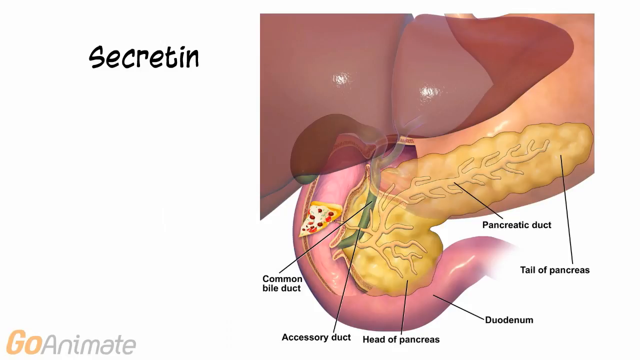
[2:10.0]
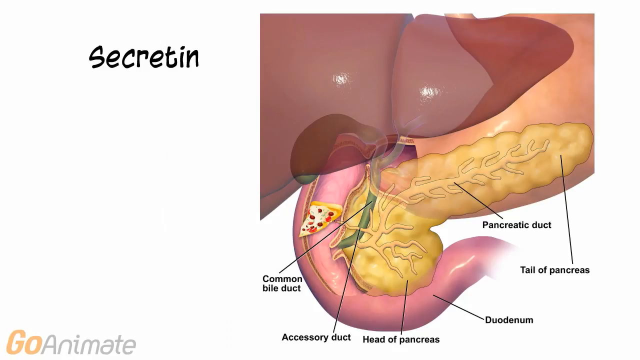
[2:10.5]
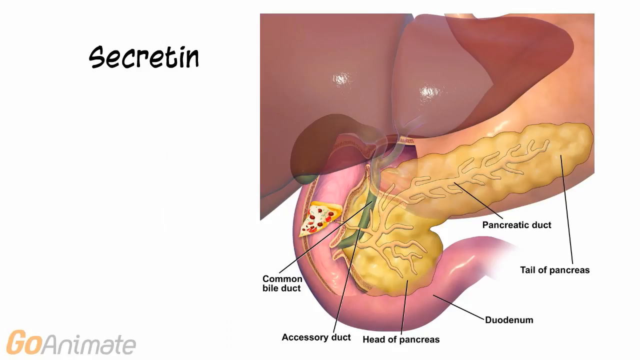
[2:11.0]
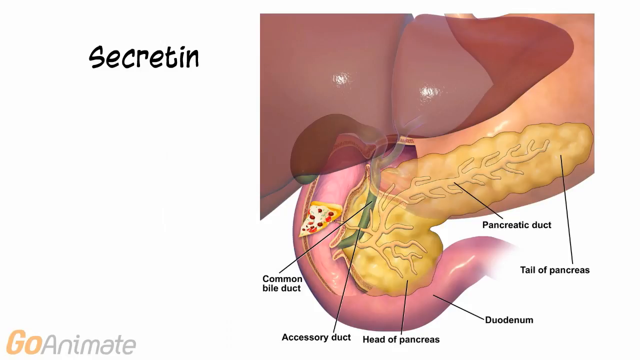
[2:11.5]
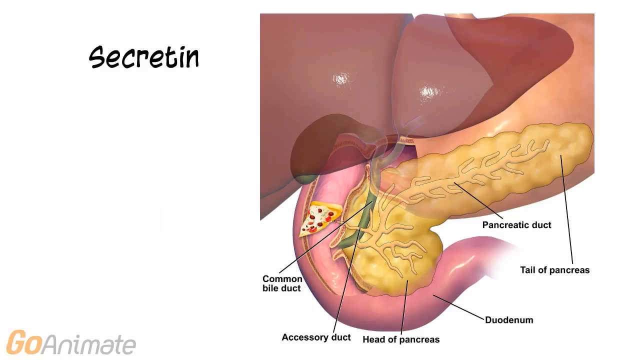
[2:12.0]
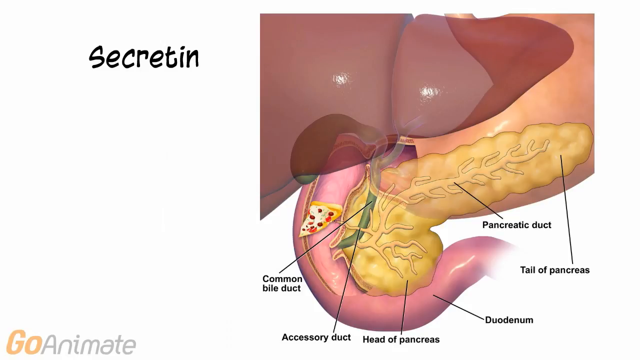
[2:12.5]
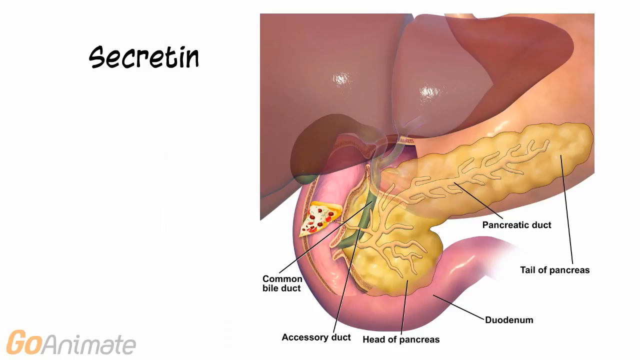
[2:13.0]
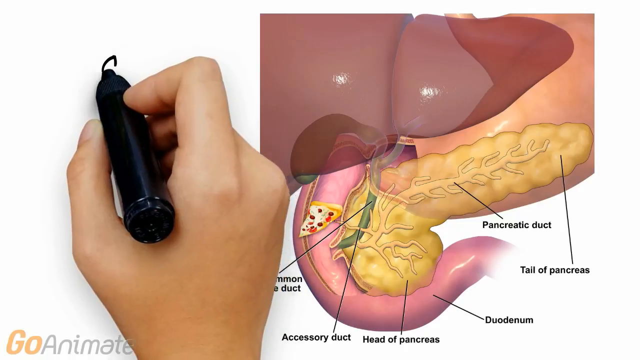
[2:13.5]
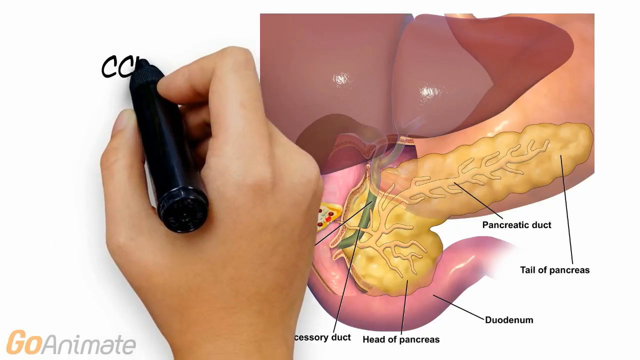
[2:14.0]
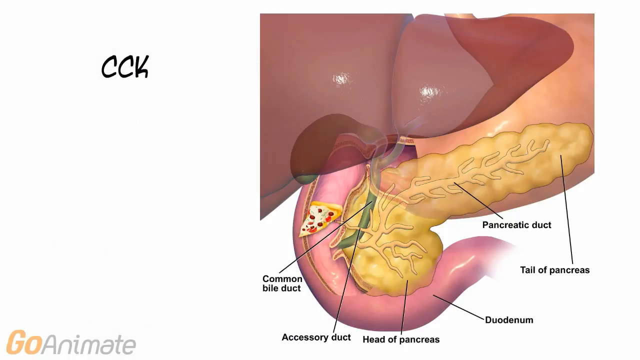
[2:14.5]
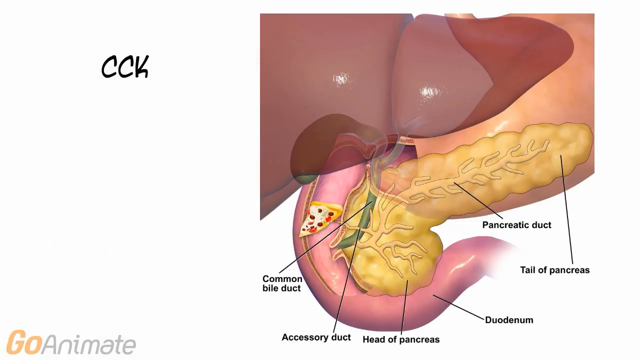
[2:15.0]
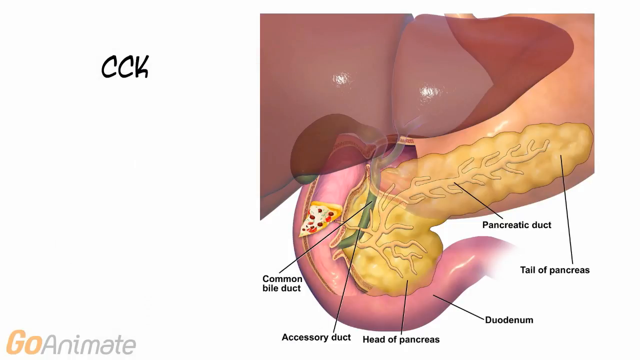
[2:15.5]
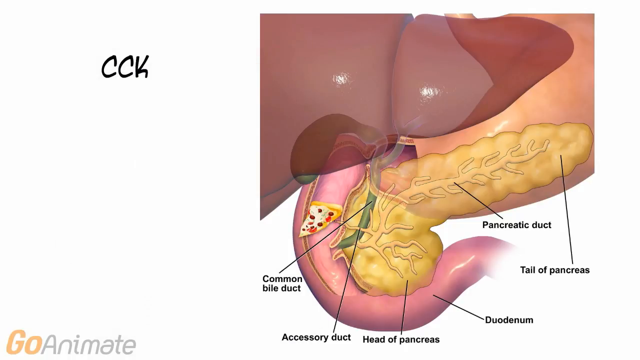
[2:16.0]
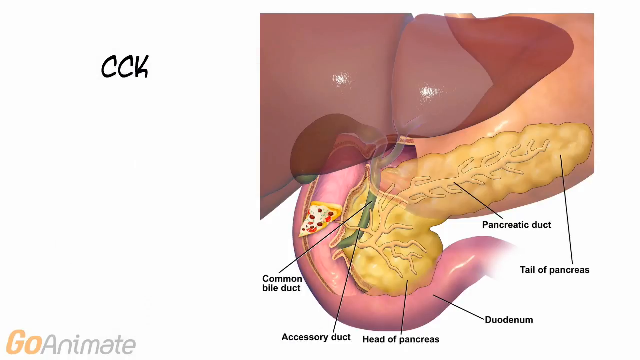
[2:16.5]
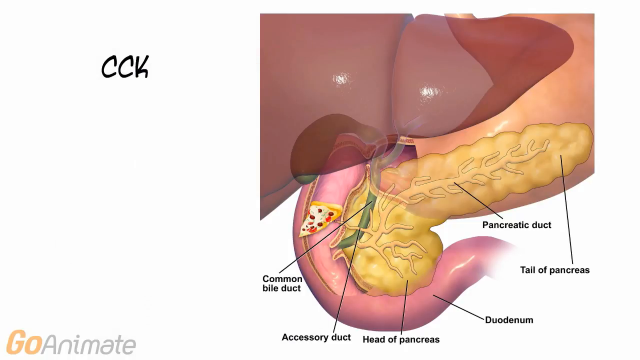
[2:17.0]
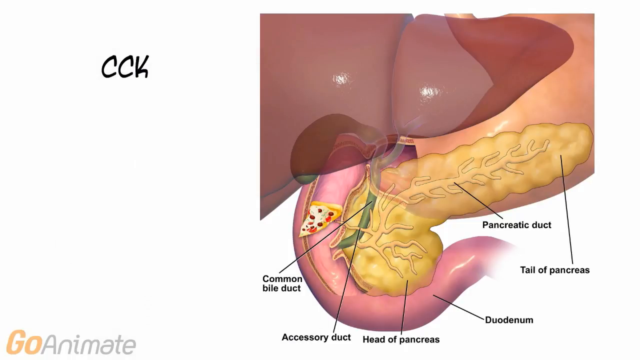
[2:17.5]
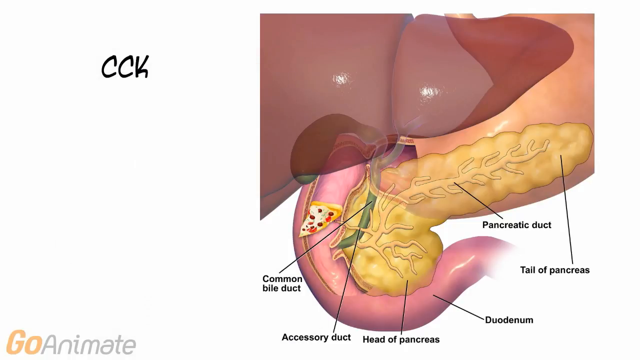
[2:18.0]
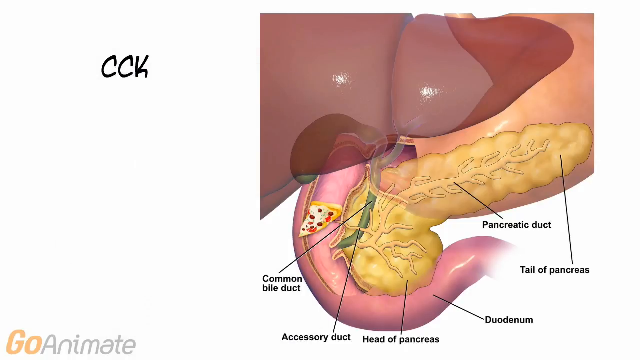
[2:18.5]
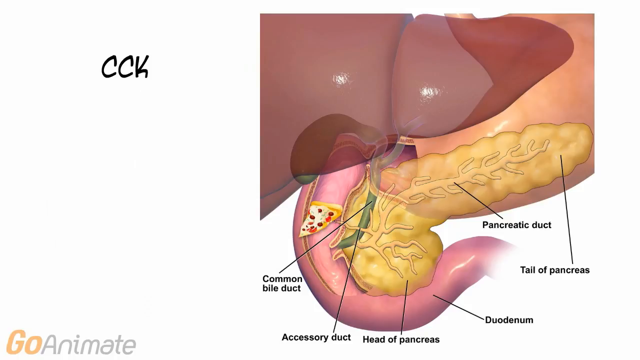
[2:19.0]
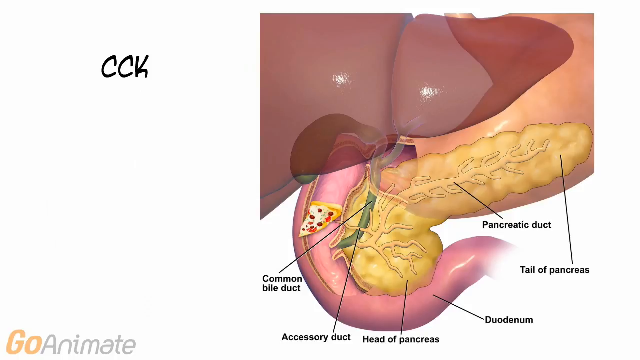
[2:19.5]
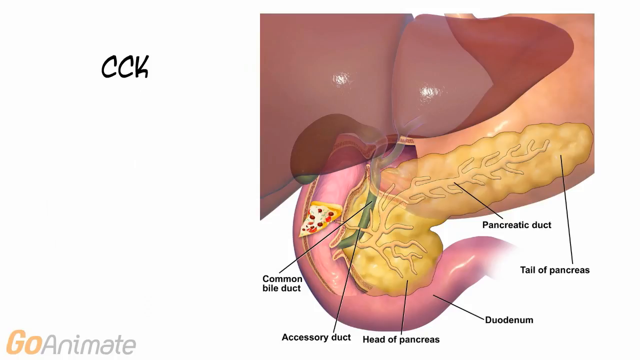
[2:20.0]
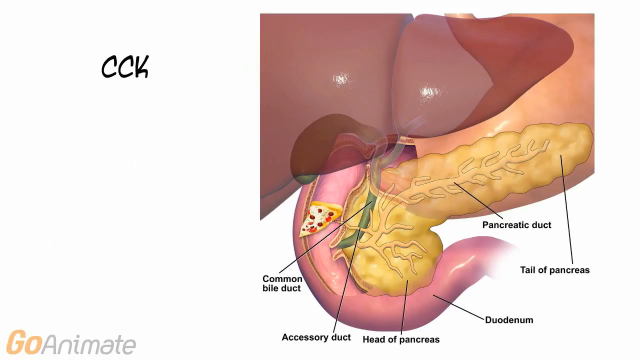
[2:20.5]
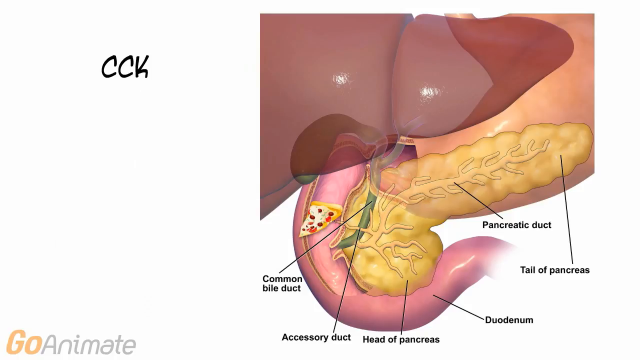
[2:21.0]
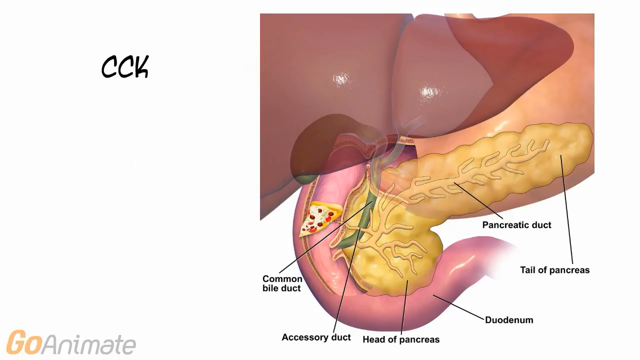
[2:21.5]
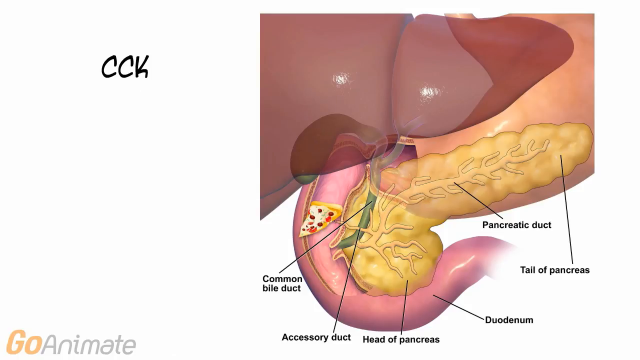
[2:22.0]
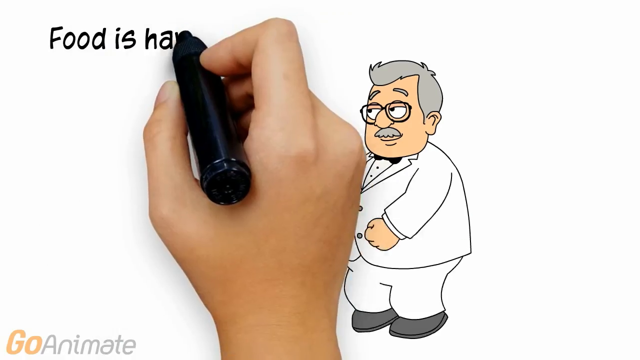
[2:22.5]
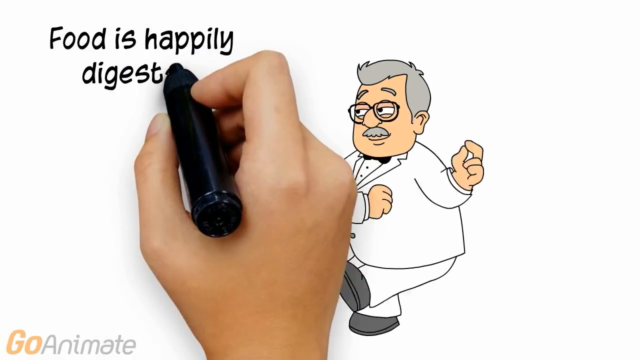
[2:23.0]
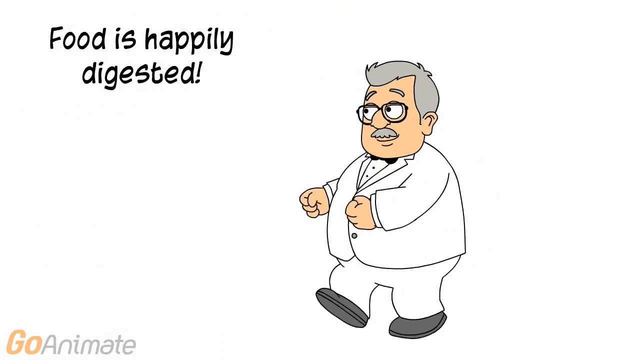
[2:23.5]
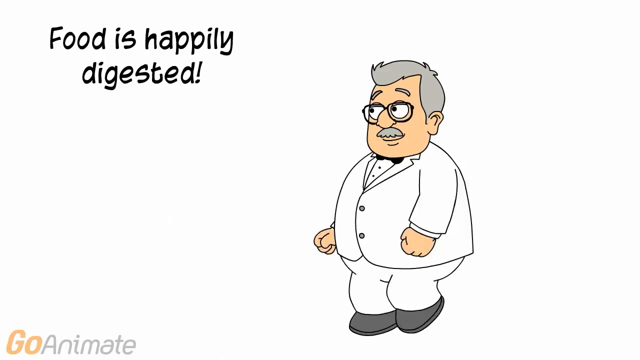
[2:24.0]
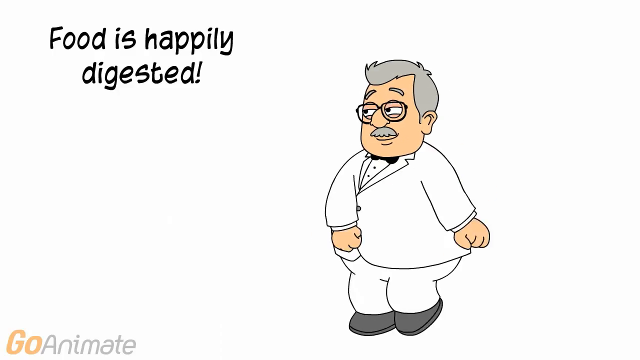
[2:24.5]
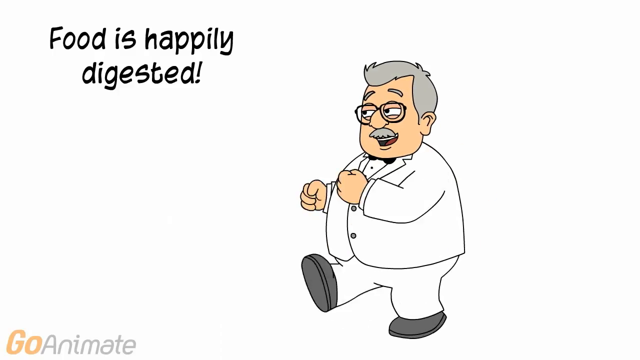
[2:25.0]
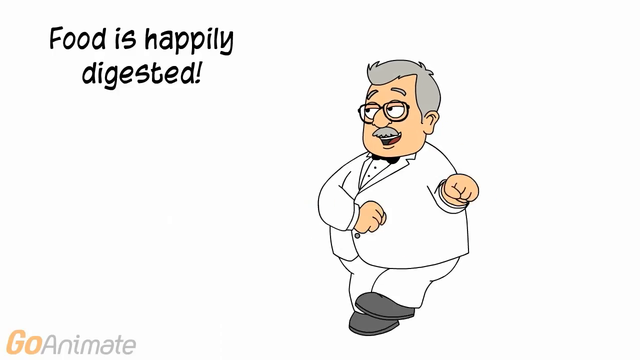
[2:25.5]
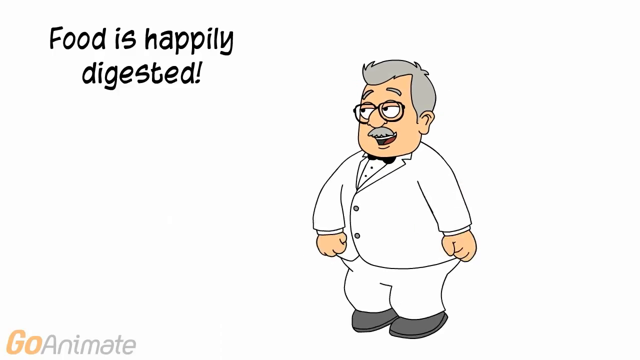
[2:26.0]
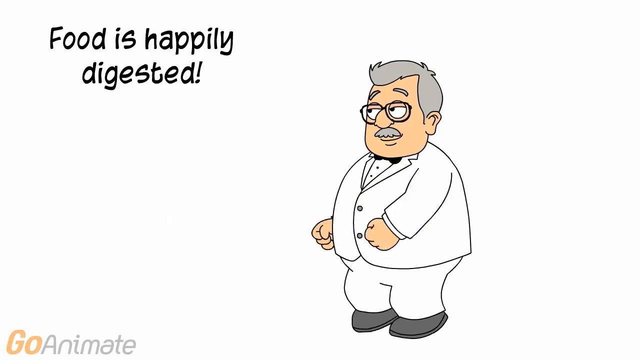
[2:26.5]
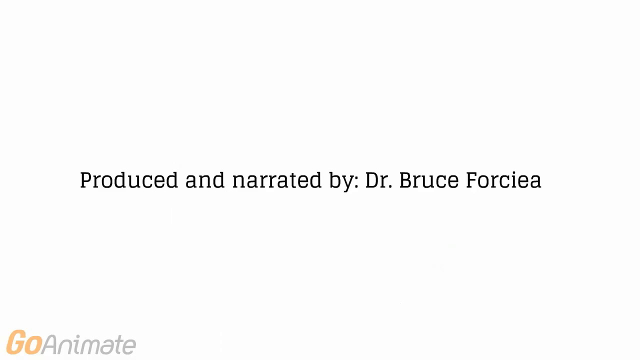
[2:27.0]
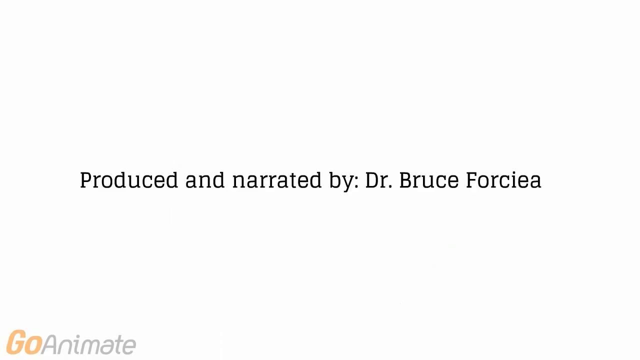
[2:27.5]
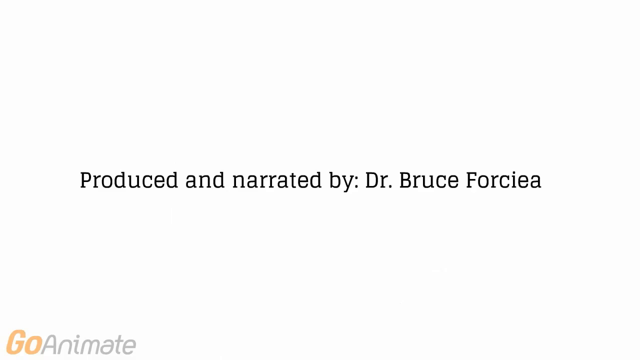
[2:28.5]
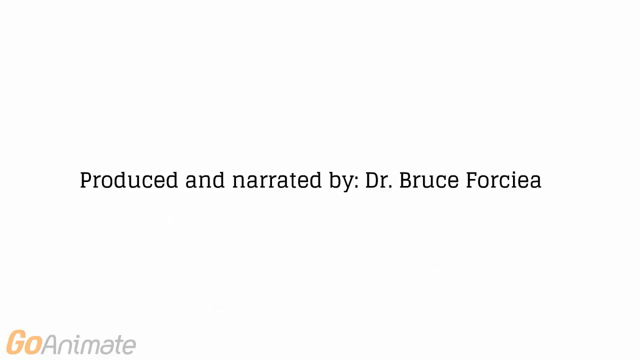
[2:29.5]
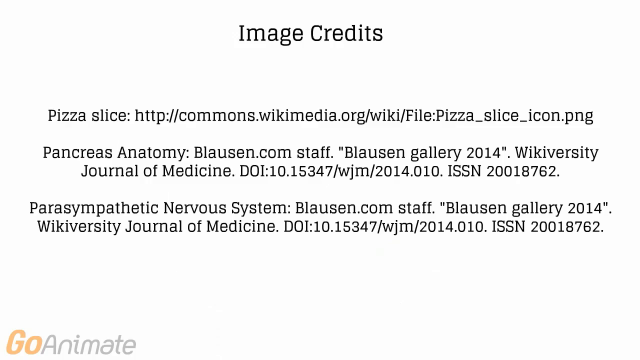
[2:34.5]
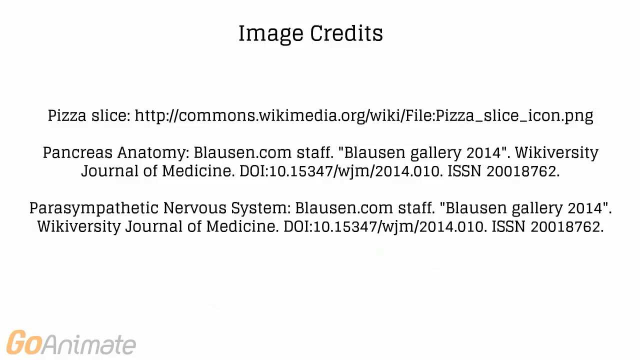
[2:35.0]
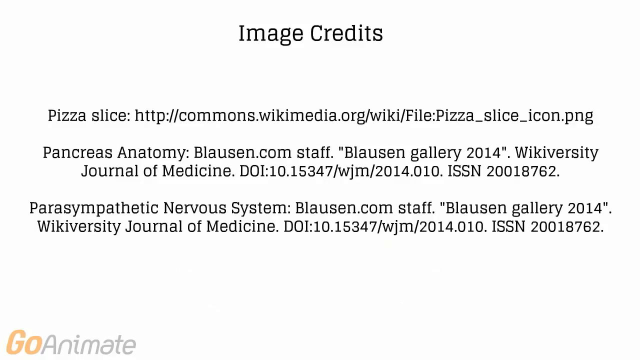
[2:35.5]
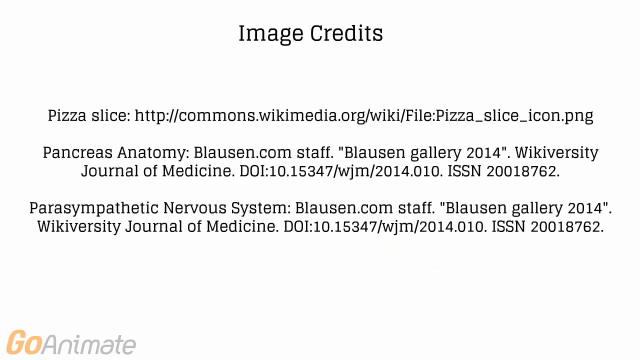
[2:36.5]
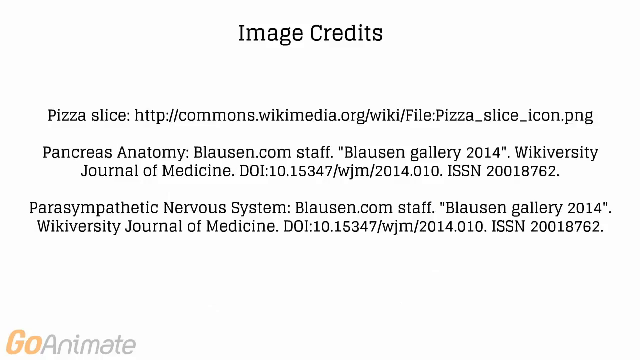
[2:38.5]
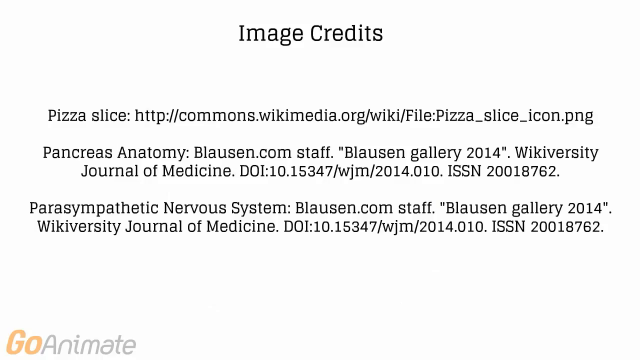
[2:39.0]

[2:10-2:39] The same detailed image of the pancreas area remains, labeled along with the surrounding parts, with "CCK" written on the side. The scene then transitions back to the man in the big white suit with a big belly, who dances around while "food is happily digested" is written out on the side. The outro follows on a plain white screen, showing that the video was produced and narrated by Dr. Bruce Forcia. Image credits follow, listing the sources of the pizza slice image with a link, the pancreas image from the Blossom.com staff in their 2014 gallery, the parasympathetic nervous system image from Blossom.com staff from the Blossom Gallery 2014, and the Wikiversity Journal of Medicine, along with a link.